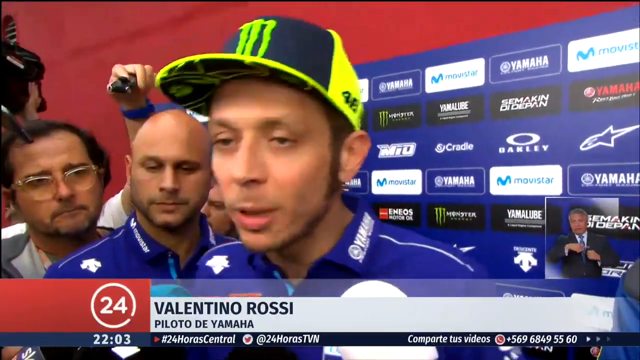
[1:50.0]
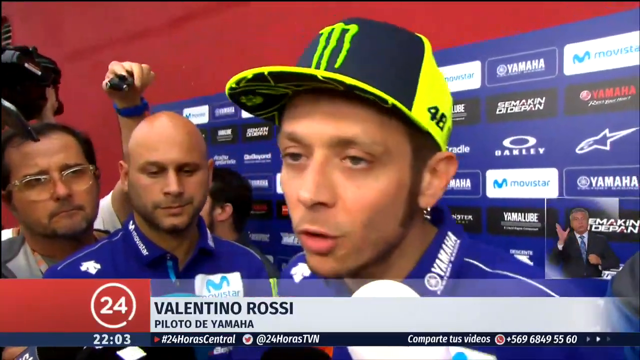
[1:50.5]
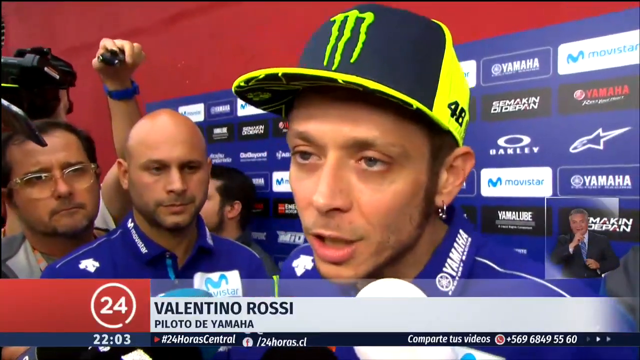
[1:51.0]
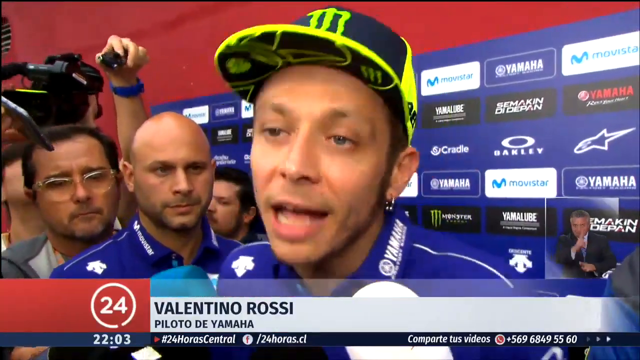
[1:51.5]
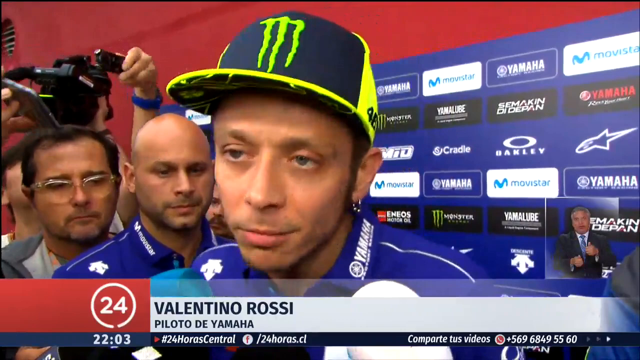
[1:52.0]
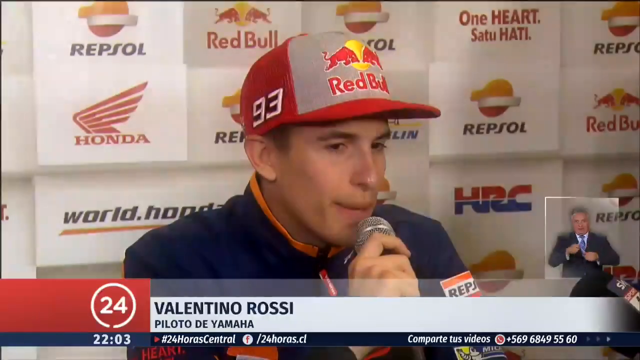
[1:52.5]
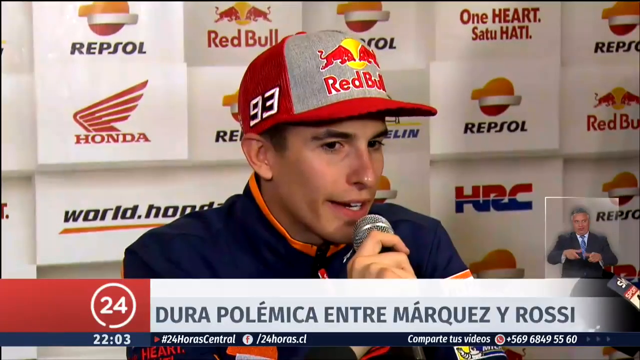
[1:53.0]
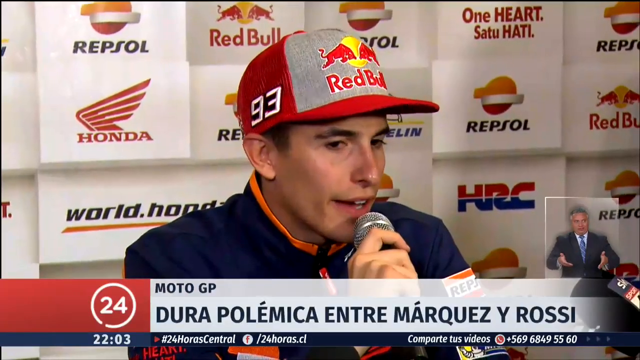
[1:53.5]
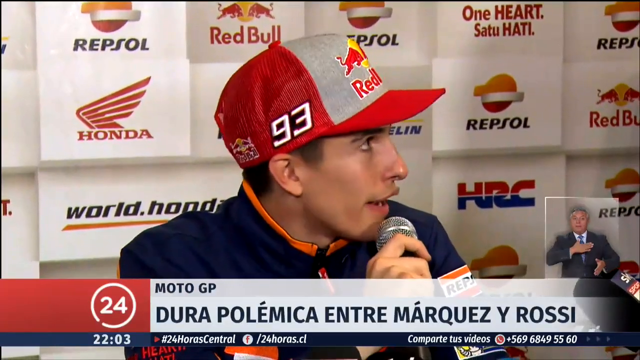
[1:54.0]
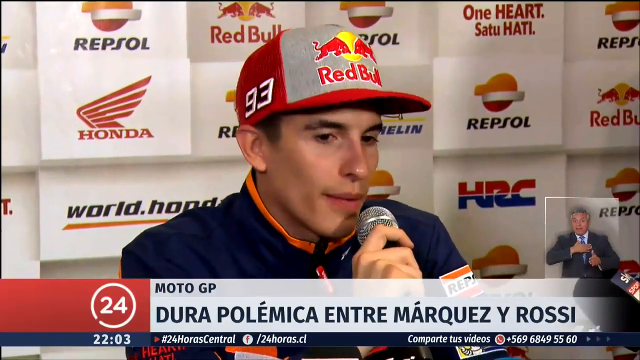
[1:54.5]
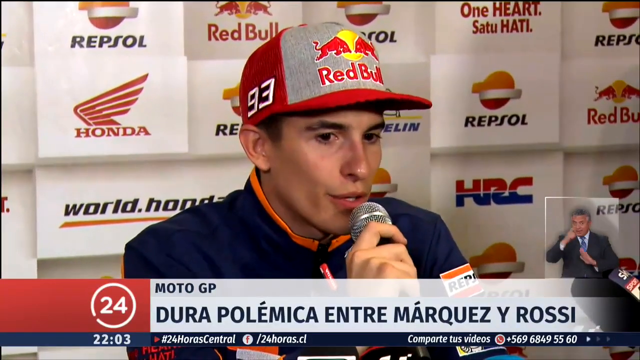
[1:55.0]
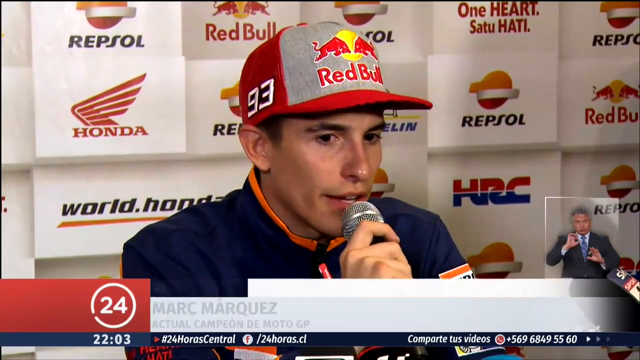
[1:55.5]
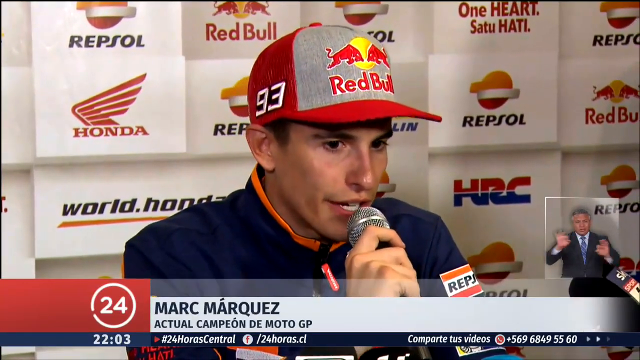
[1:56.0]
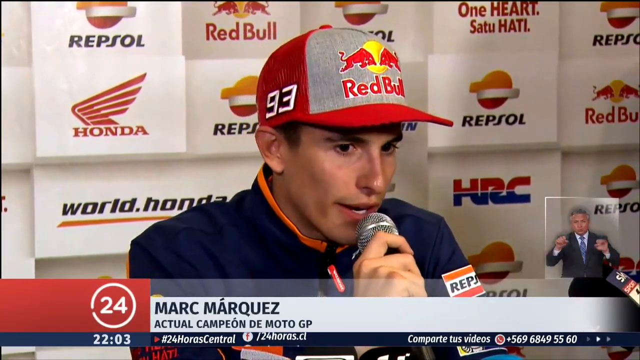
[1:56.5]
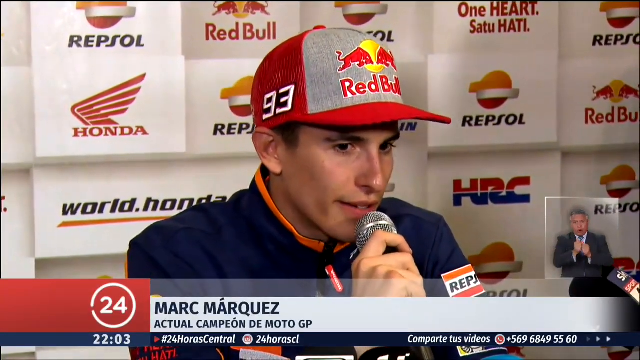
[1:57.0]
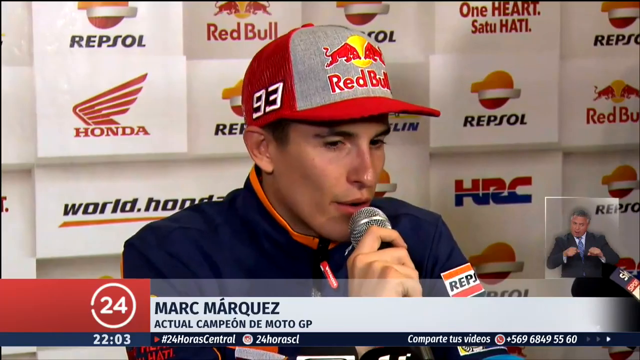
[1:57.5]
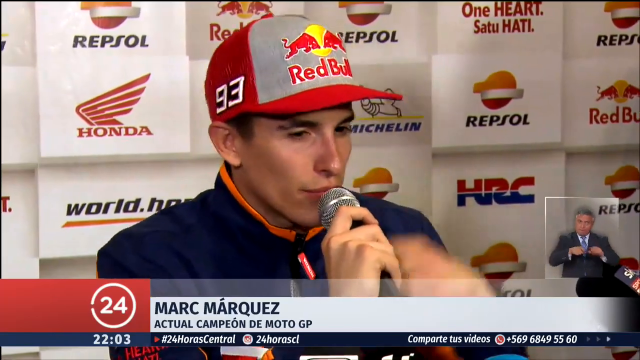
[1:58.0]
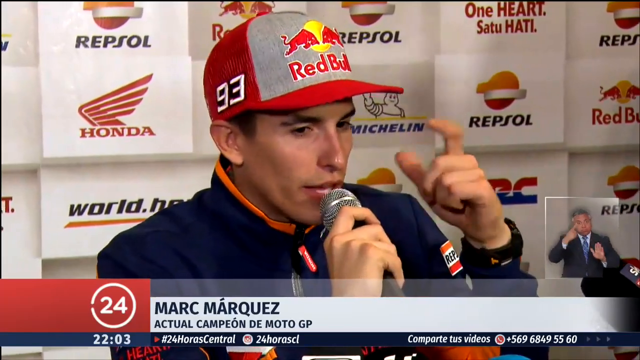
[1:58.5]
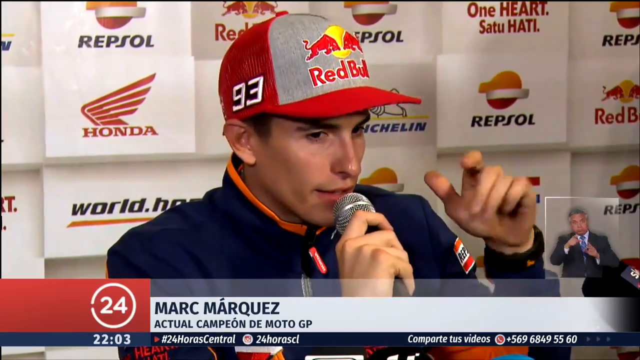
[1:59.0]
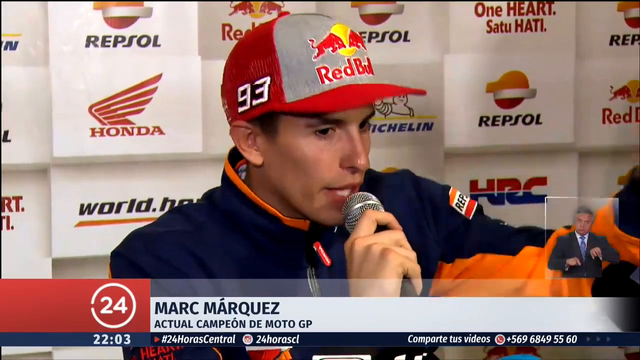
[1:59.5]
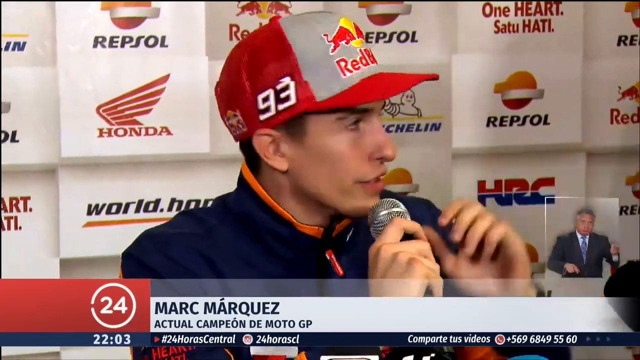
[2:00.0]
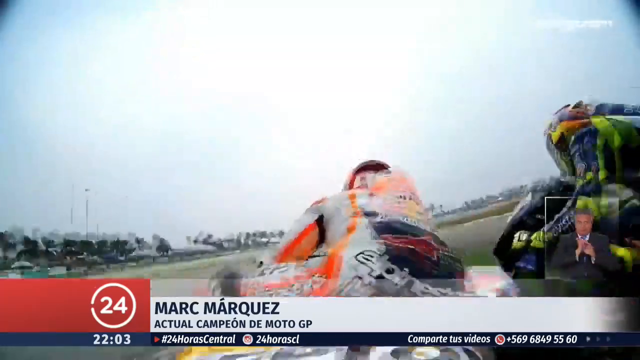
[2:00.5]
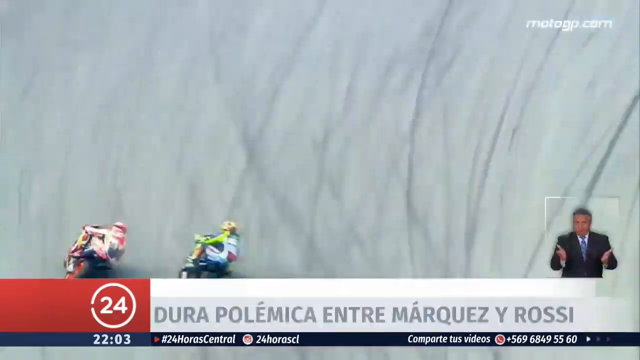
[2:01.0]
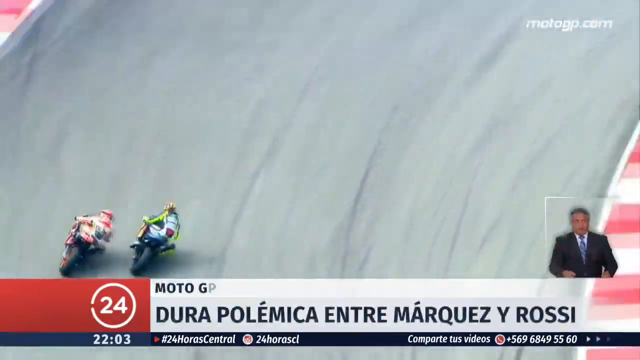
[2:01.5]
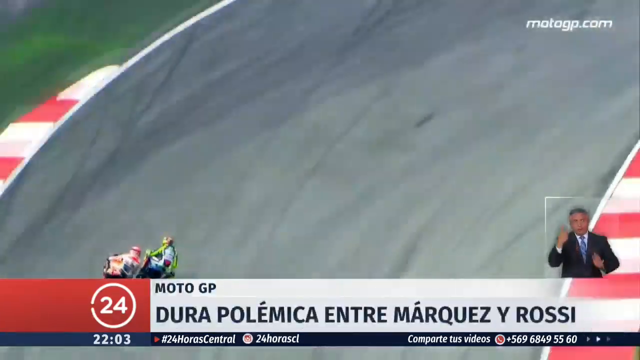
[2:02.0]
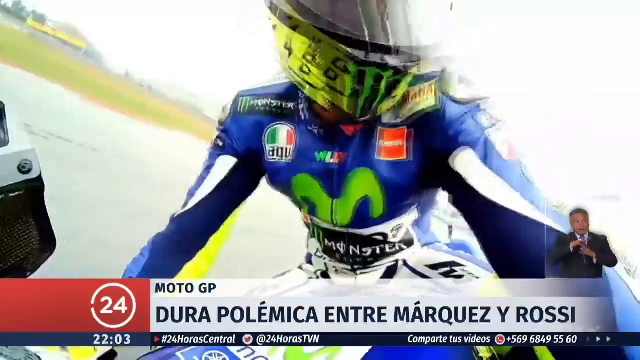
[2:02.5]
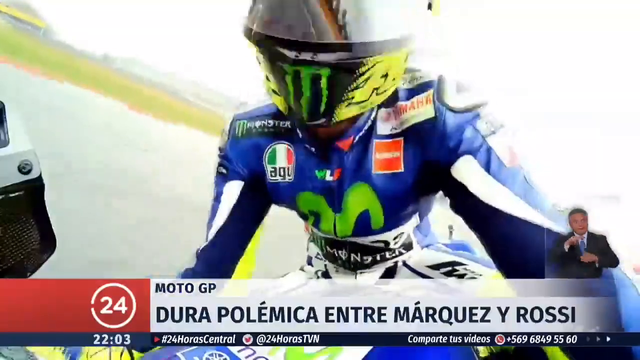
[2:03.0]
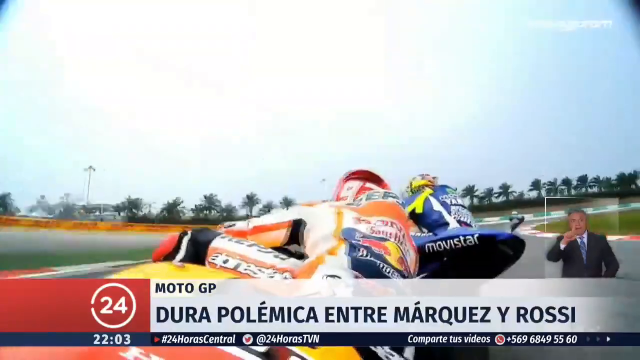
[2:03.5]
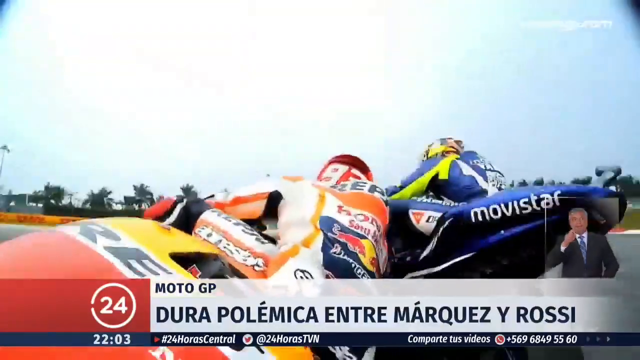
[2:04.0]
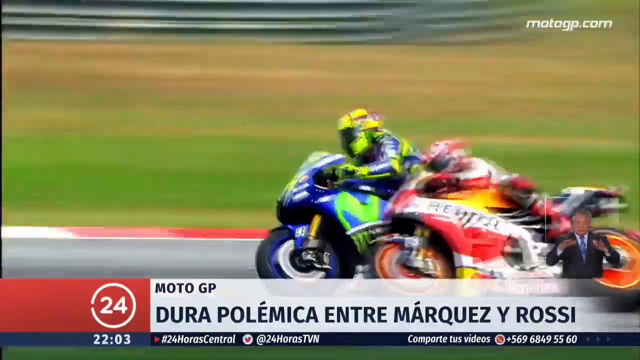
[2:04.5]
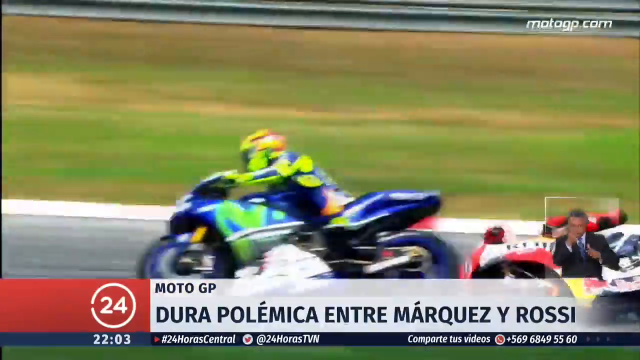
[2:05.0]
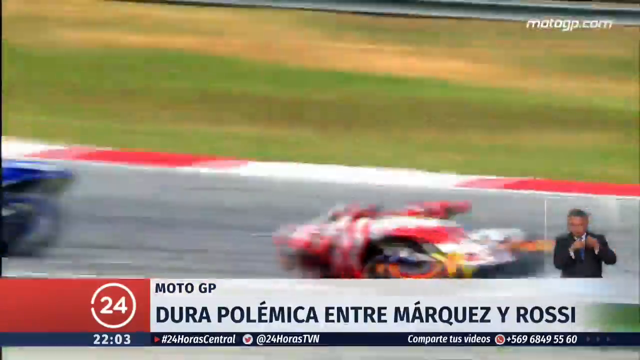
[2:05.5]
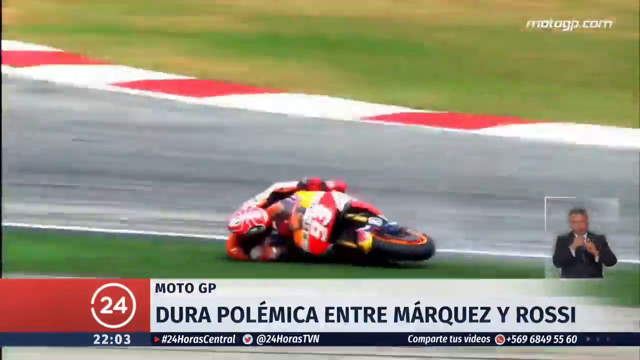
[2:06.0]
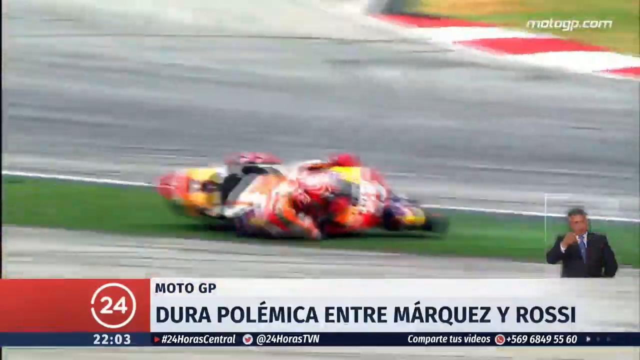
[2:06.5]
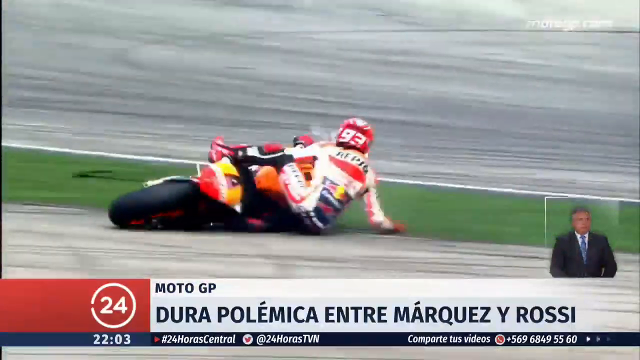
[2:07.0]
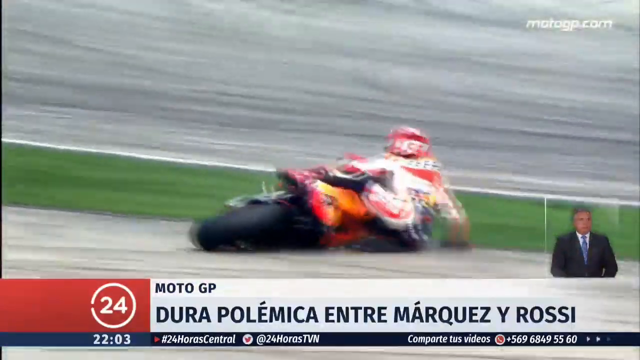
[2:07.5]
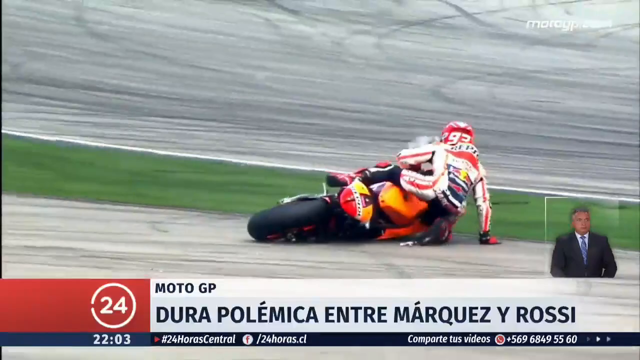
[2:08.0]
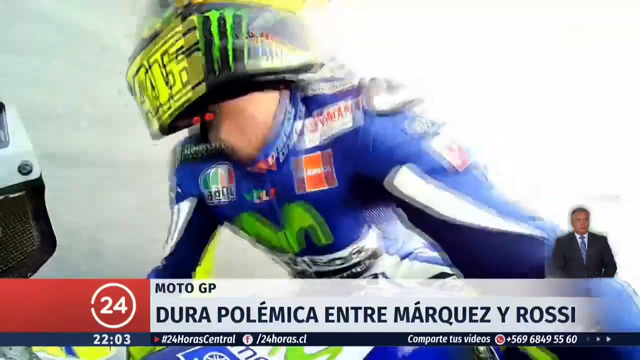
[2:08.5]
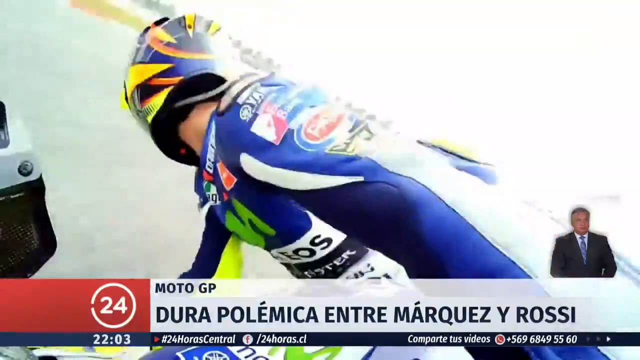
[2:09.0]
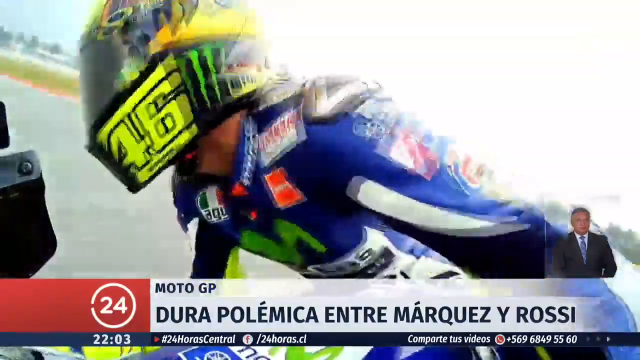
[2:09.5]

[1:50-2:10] An interview continues with a racer named Valentino Rossi, with Yamaha shown as a sponsor and a few people behind him. The wall is blue with white writing of different sponsors, Yamaha and a bunch of others. The tarp or structure they are in is red, and the roof looks red. The man being interviewed may be the winner. Another person appears with Red Bull sponsors, and Red Bull, Honda and a few other sponsors are behind him. He wears a blue jacket, and his hat is red, with Red Bull and 93 on it. He is young, maybe in his 20s: Mark Marquez. The interpreter is interpreting. Outside footage follows of two racers going around the track; they run into each other and one falls, number 93 in red, while the blue one kind of looks back. HRC is shown as another sponsor.